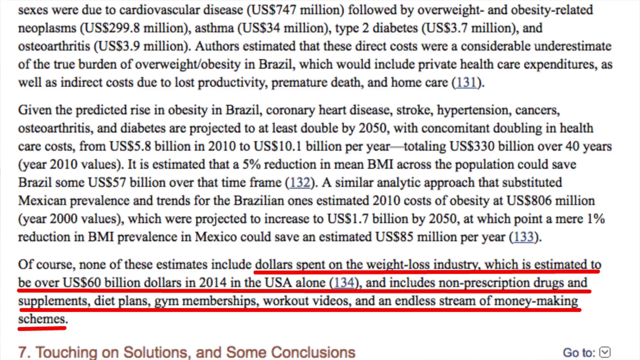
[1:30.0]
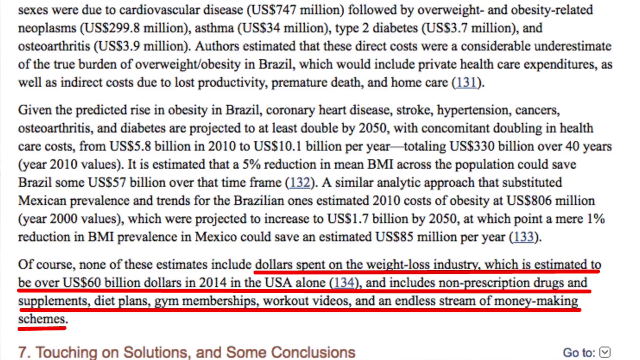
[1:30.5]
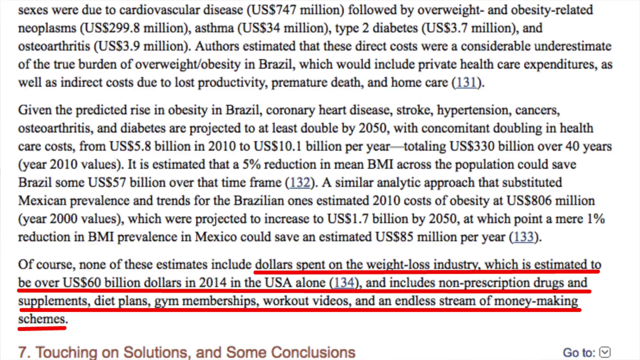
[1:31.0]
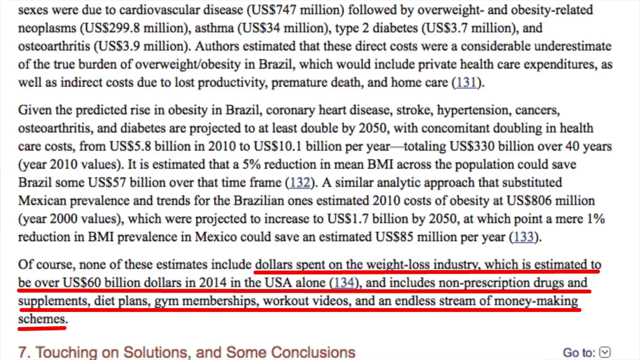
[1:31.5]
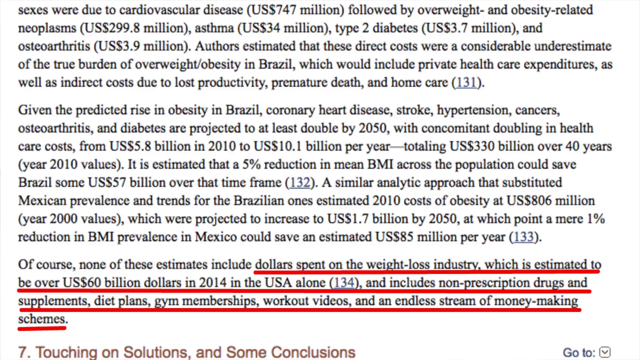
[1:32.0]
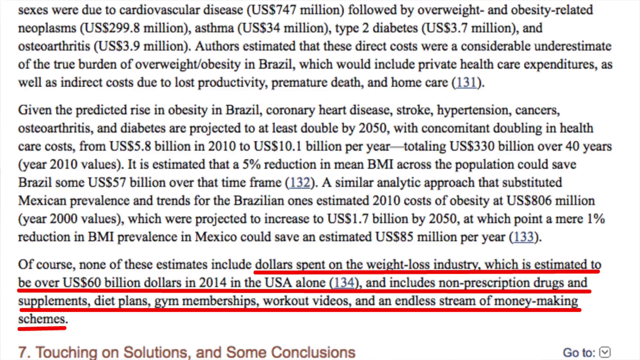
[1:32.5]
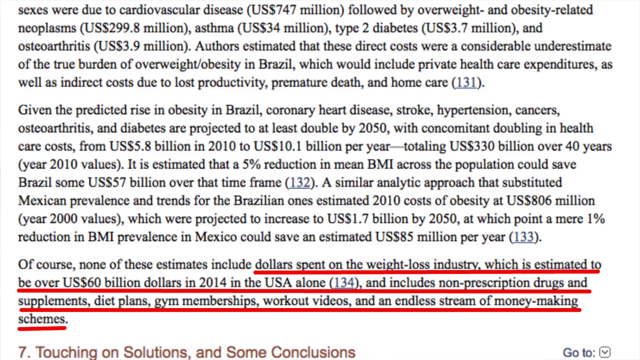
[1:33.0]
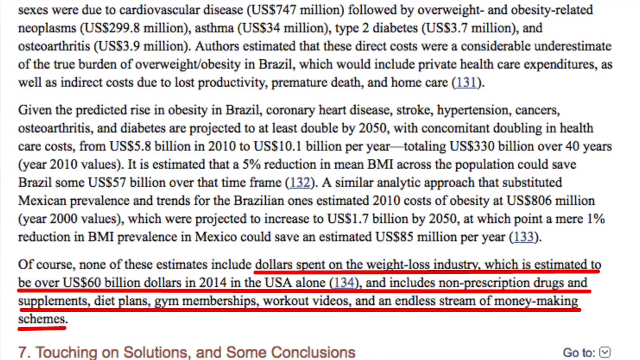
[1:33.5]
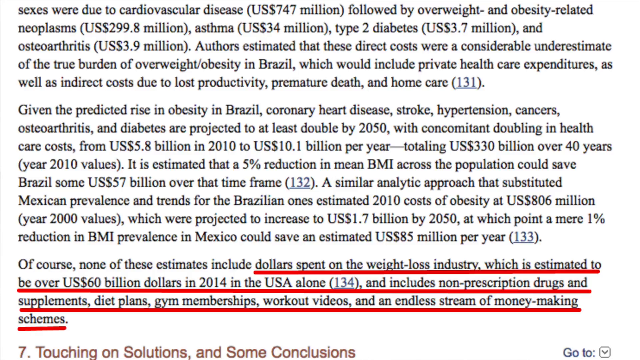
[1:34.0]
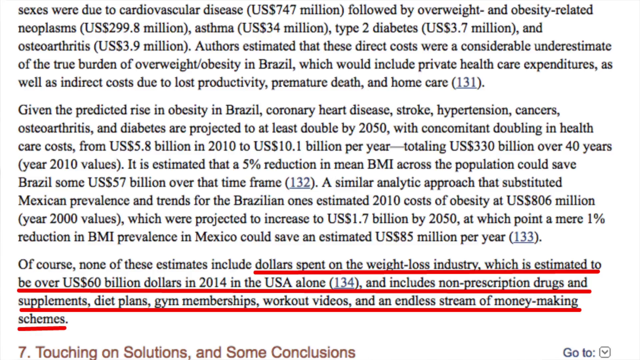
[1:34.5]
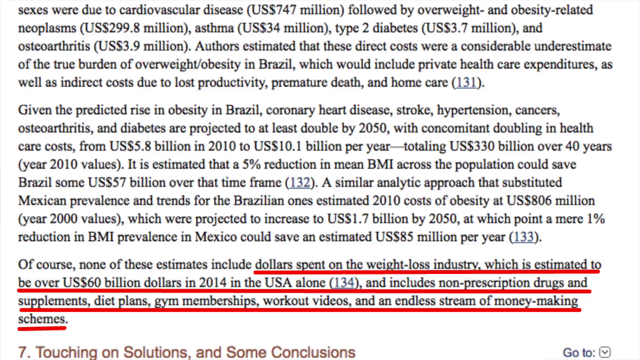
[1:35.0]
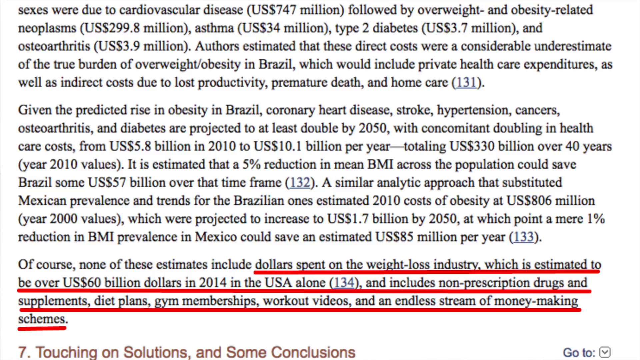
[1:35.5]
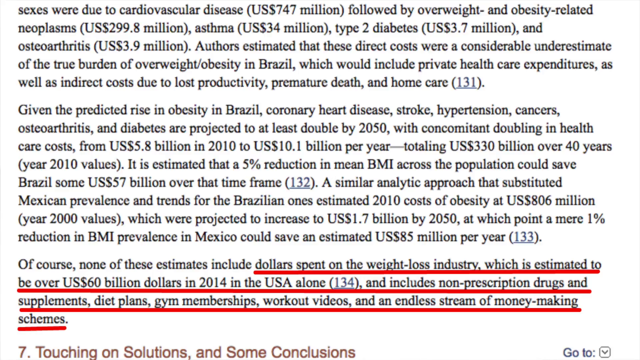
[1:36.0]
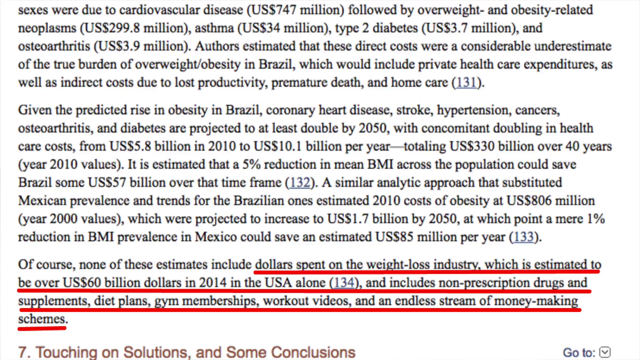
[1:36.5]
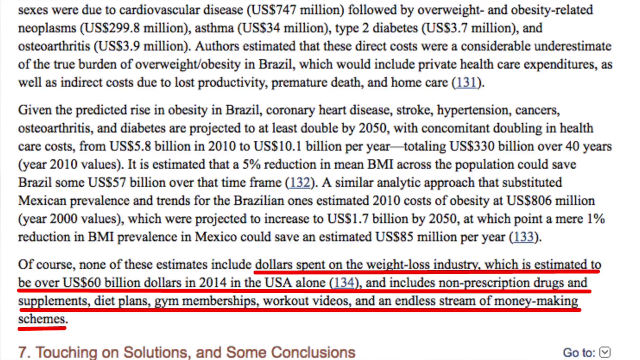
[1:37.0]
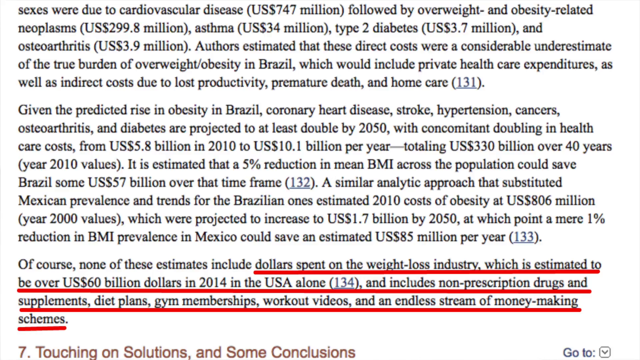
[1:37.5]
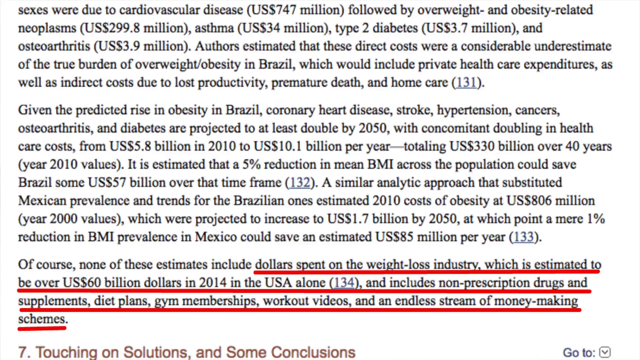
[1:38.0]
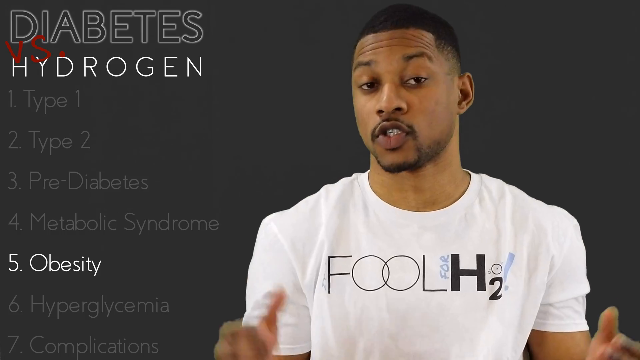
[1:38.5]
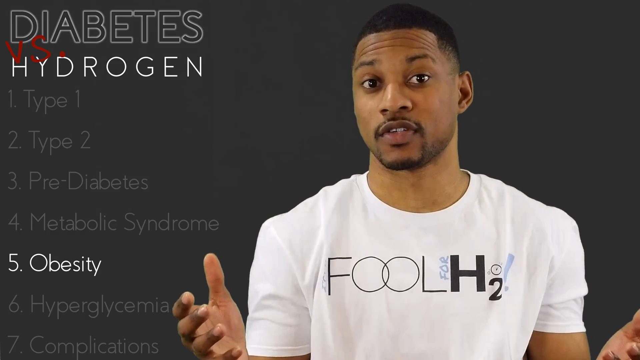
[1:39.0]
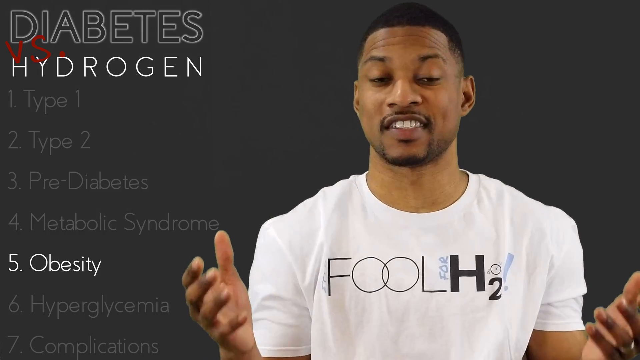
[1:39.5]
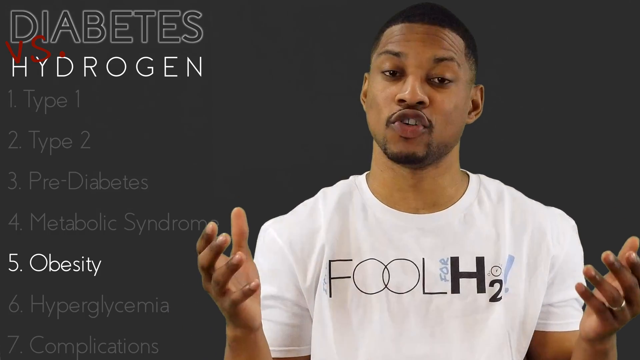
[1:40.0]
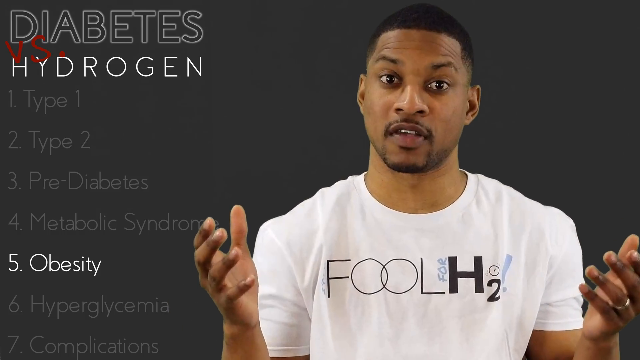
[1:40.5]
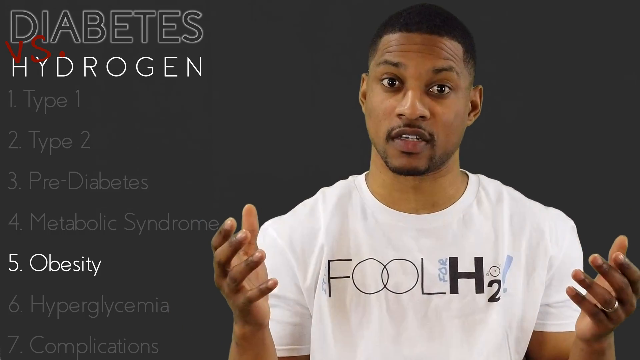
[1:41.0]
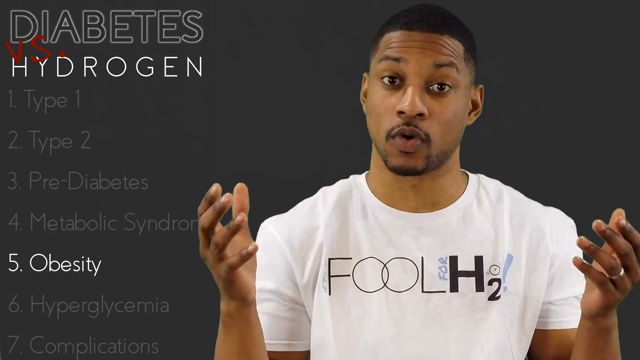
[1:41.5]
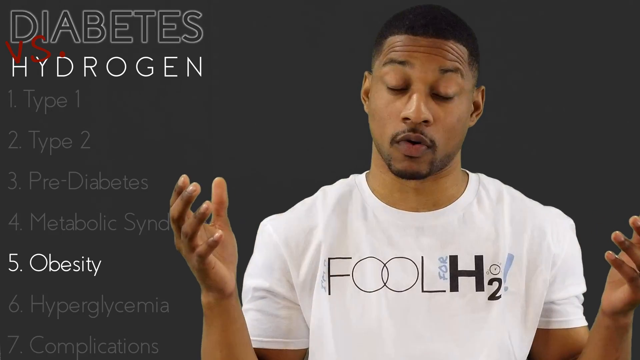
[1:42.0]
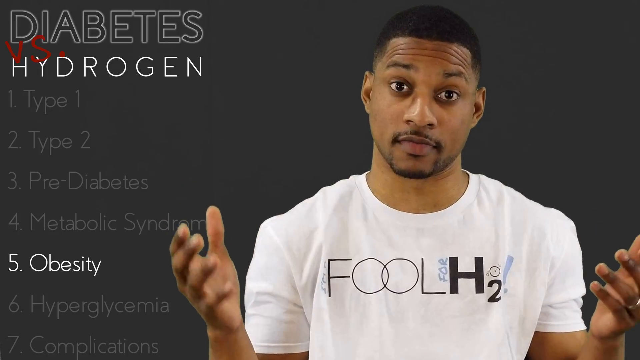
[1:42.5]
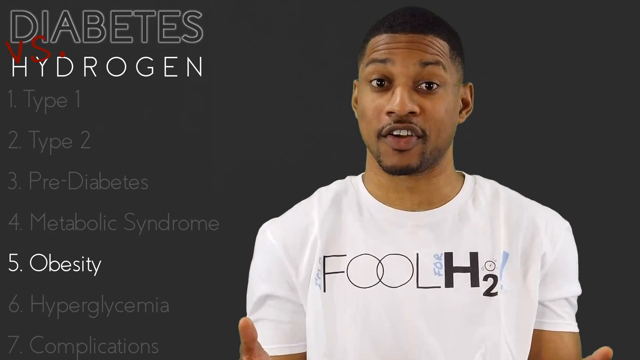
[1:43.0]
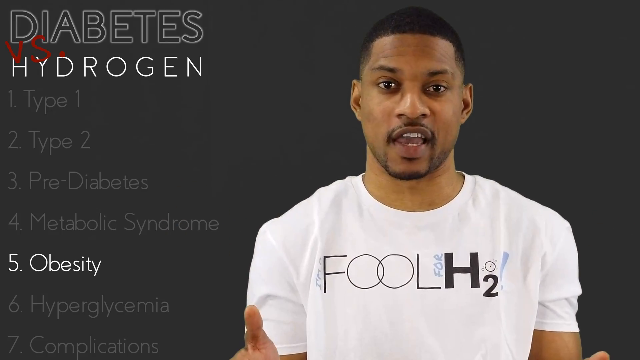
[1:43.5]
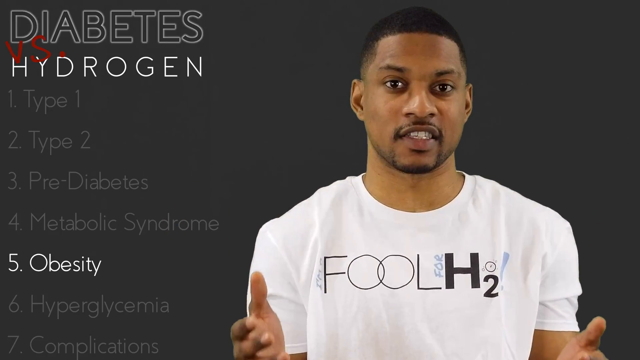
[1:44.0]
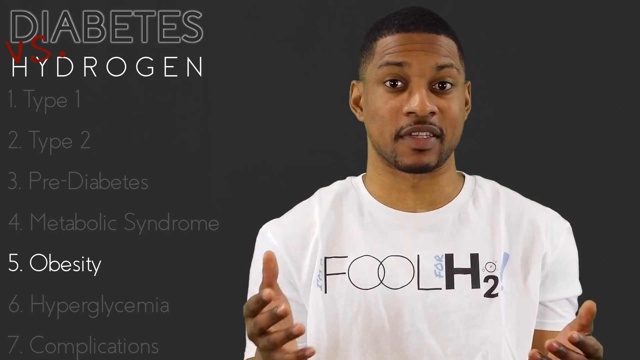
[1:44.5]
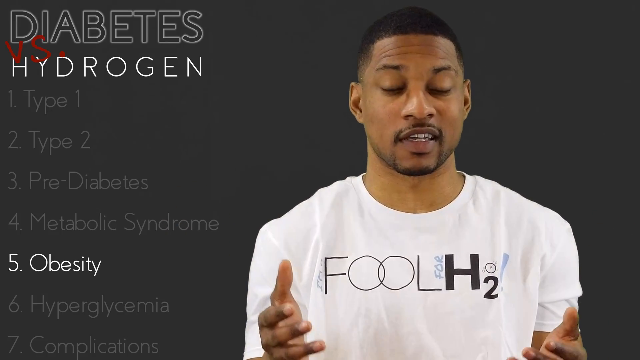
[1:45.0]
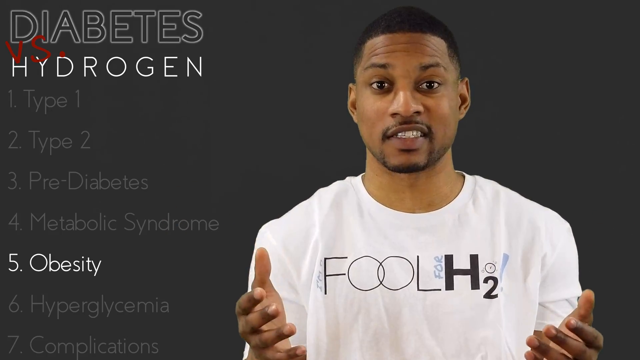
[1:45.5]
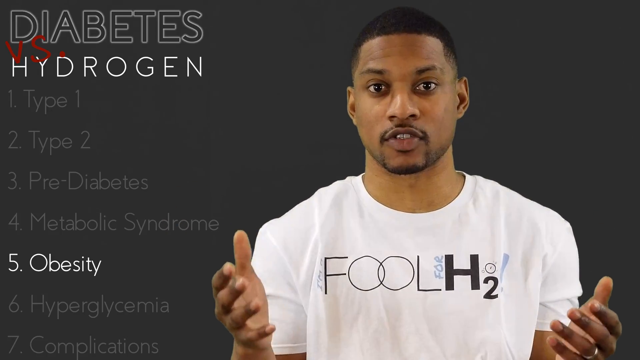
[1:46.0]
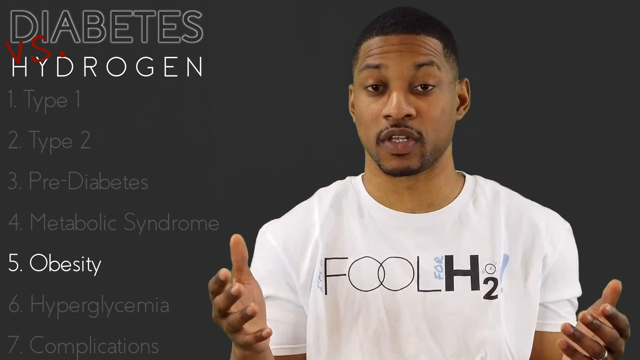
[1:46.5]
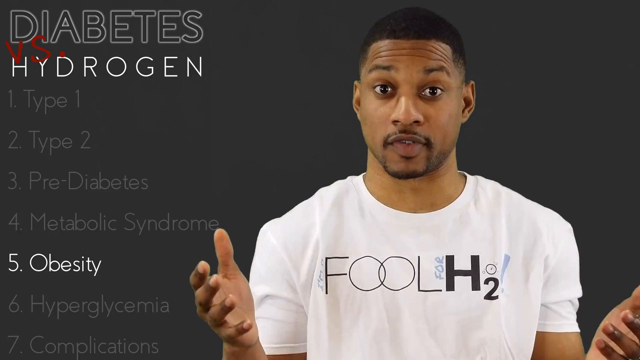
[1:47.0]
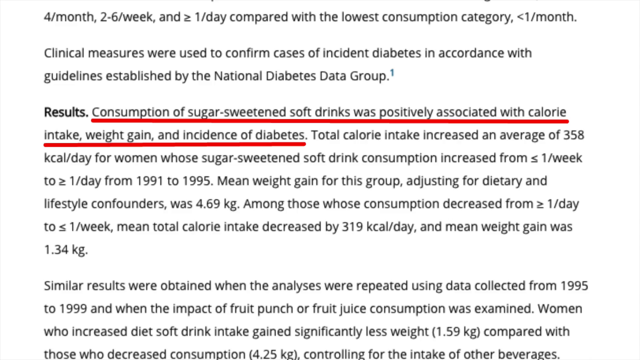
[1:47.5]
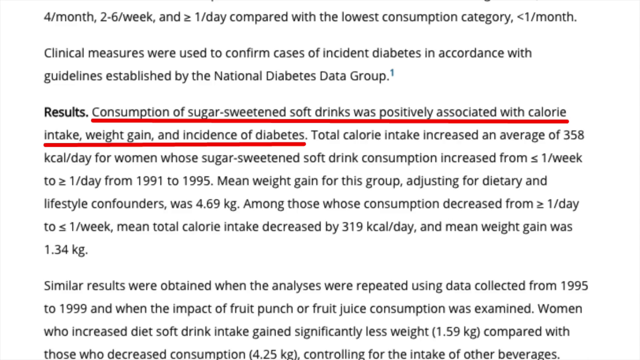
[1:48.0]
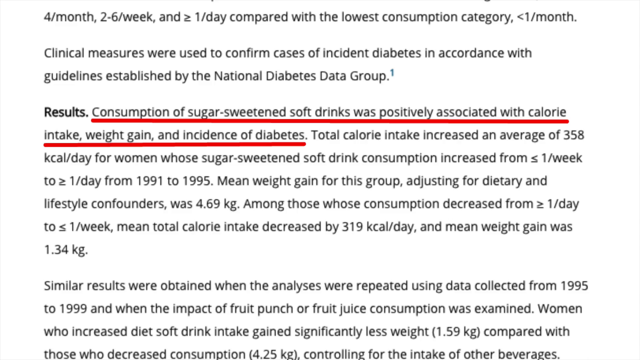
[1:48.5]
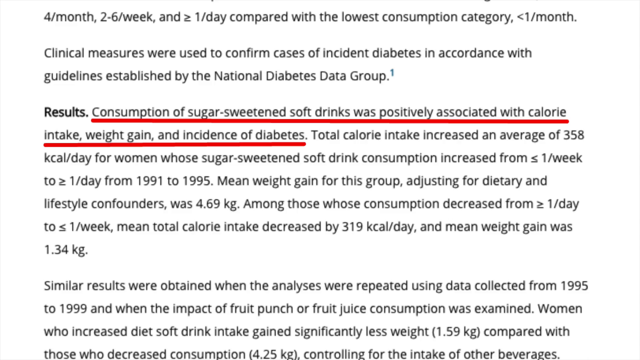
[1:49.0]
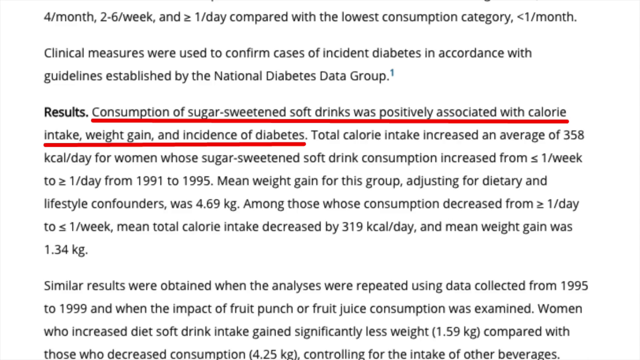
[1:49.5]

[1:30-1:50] The information continues with costs attributed to cardiovascular disease at 7.7 million, obesity-related neoplasms at USD 299.8 million, asthma at USD 34 million, type 2 diabetes at 3.7 million and osteoarthritis at 3.9 million, described as a considerable underestimate of the true burden of obesity in Brazil that would include private health care expenditure and costs due to lost productivity, premature death and home care. Given the predicted rise in obesity in Brazil, coronary heart disease, stroke, hypertension, cancers and osteoarthritis are projected to at least double by 2015.